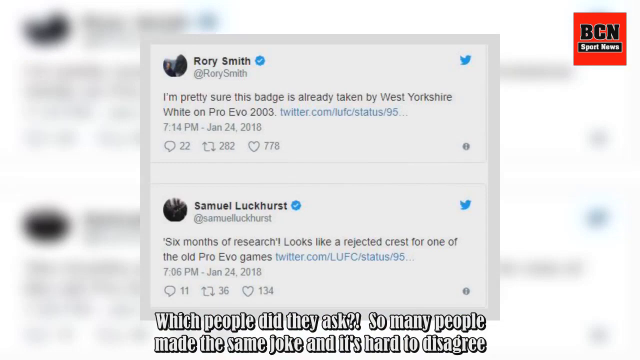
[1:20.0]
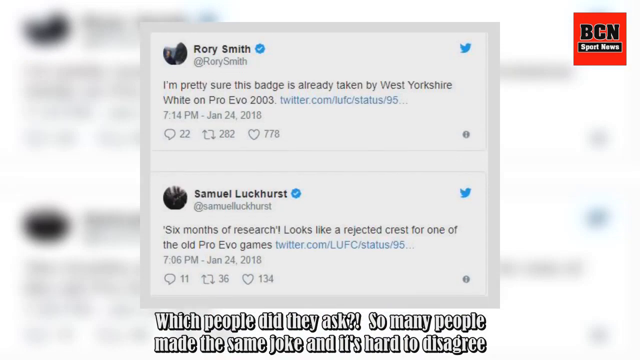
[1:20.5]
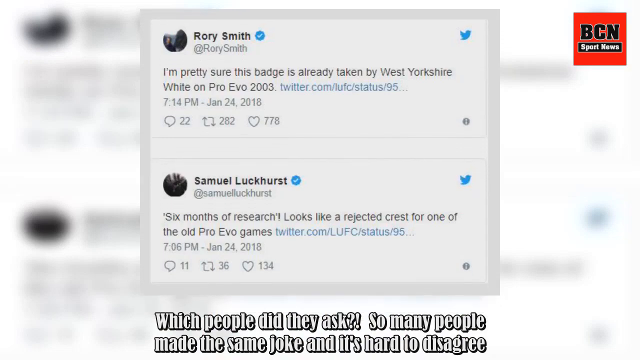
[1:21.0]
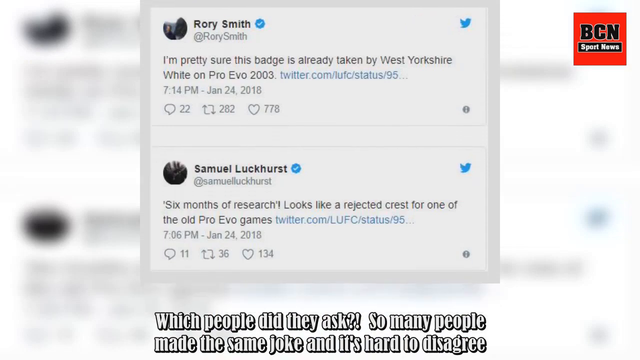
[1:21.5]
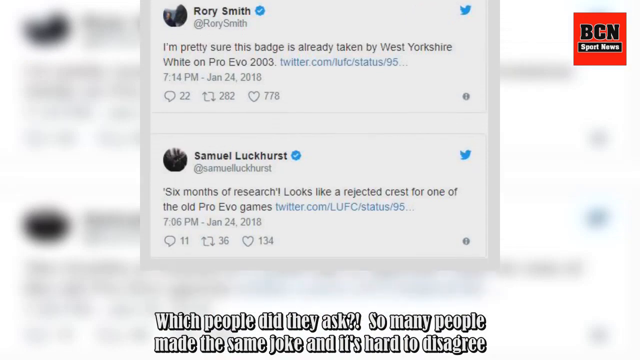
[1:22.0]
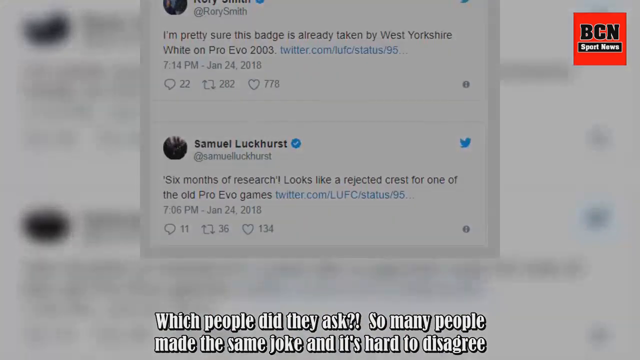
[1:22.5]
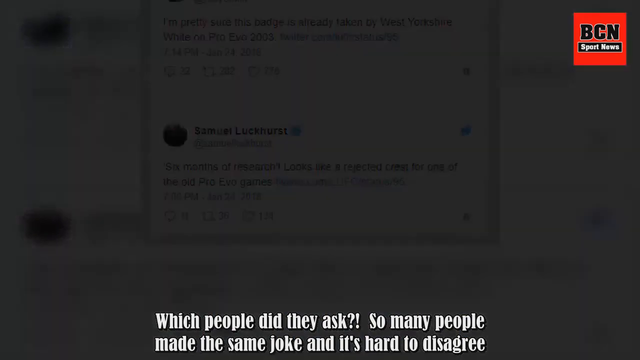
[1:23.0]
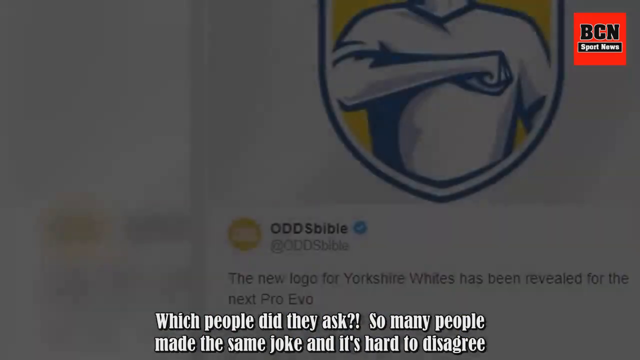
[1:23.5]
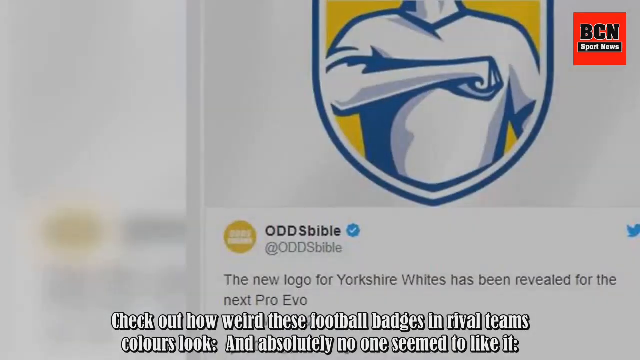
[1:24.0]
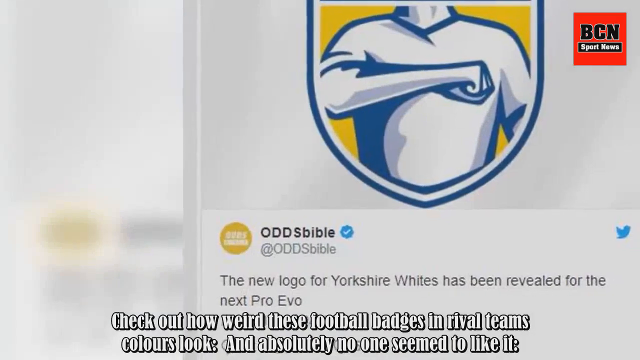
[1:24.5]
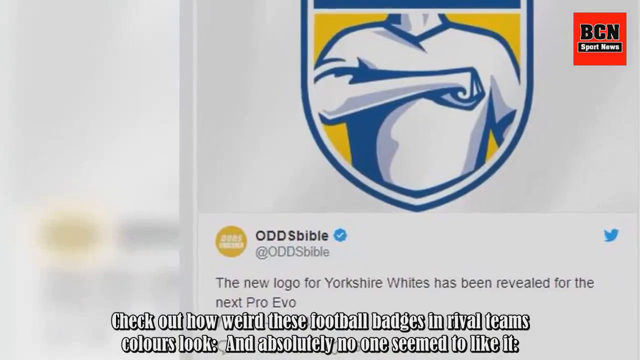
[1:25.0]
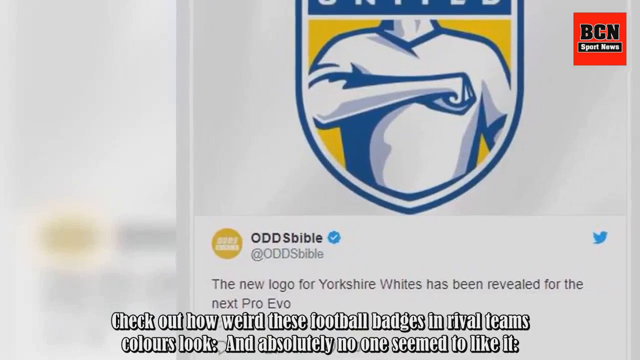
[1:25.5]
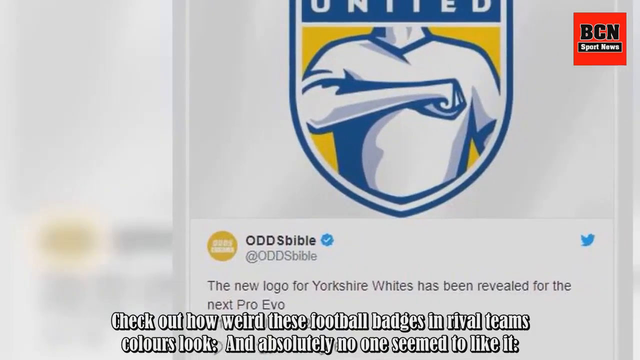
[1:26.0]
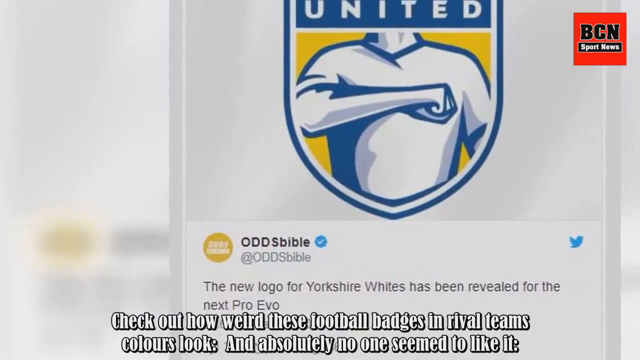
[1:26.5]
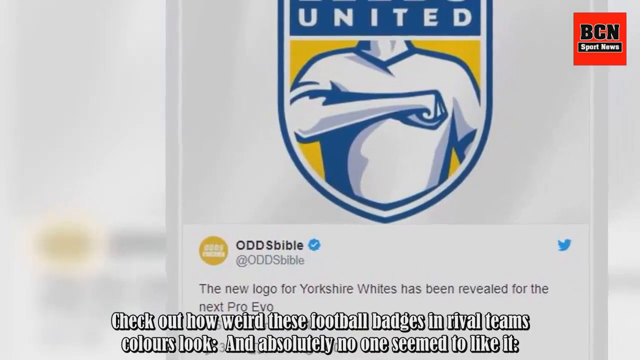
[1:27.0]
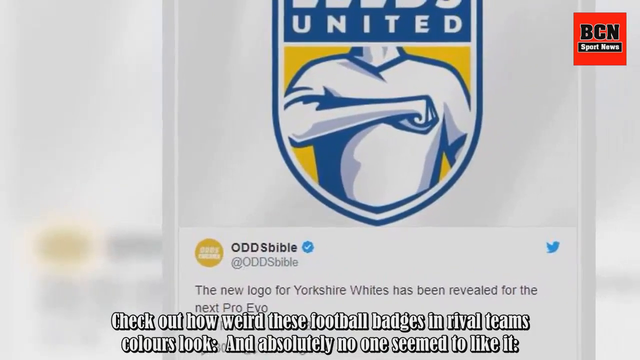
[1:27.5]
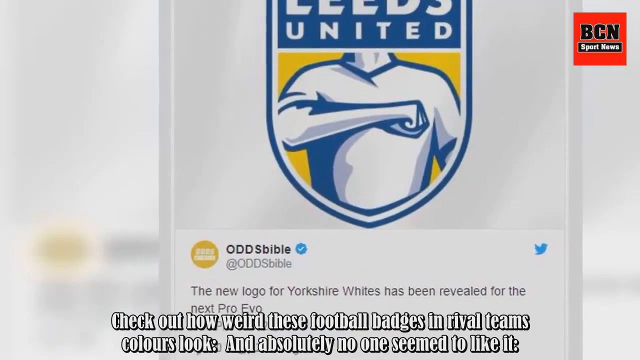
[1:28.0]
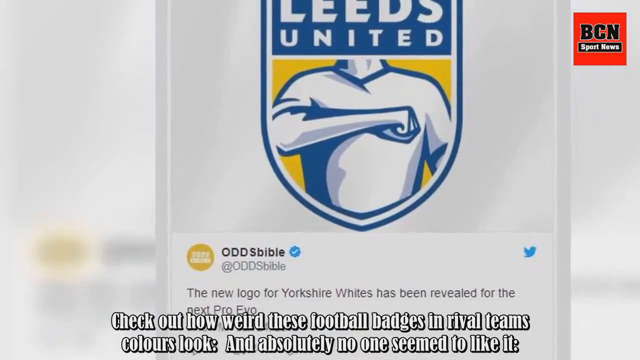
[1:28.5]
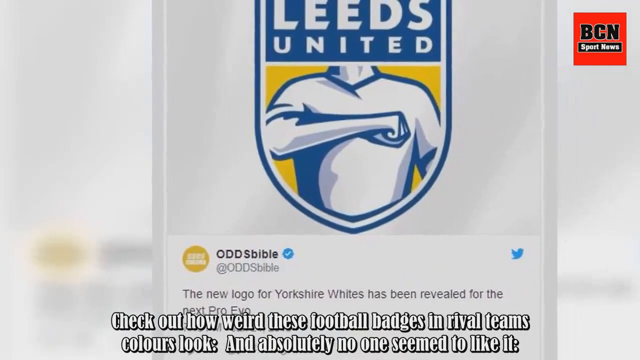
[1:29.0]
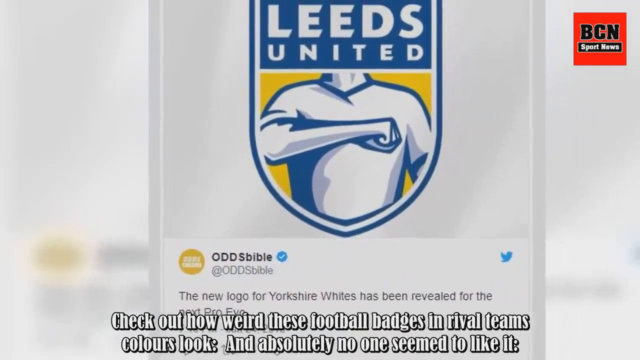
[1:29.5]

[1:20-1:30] Two tweets seem to move from the bottom of the screen to the top: one written by Rory Smith and, below it, one written by Samuel Luckhurst. As the image keeps going up, the same posts are visible behind it, blurred. White text at the bottom of the screen reads "which people did they ask? So many people made the same joke and it's hard to disagree." The image fades to black and a new Twitter post comes in, with the Leeds United logo at the top, showing a torso with an arm across the chest. Below it, the post reads "odds Bible" with a blue check mark next to it. Light text at the bottom reads "check out how weird these football badges and rival teams colors look. And absolutely no one seemed to like it."